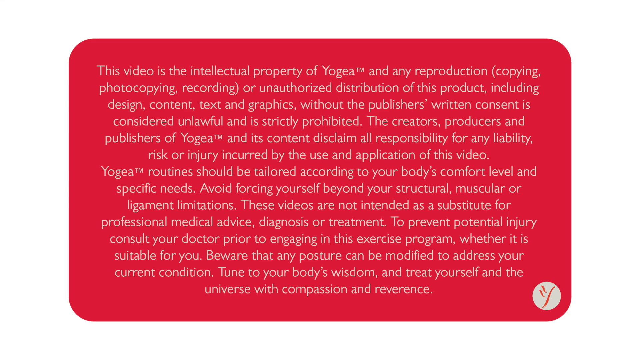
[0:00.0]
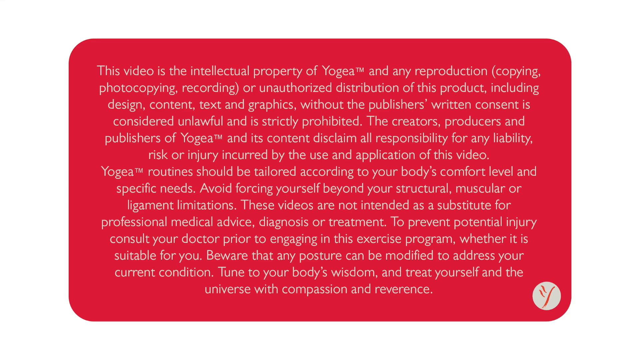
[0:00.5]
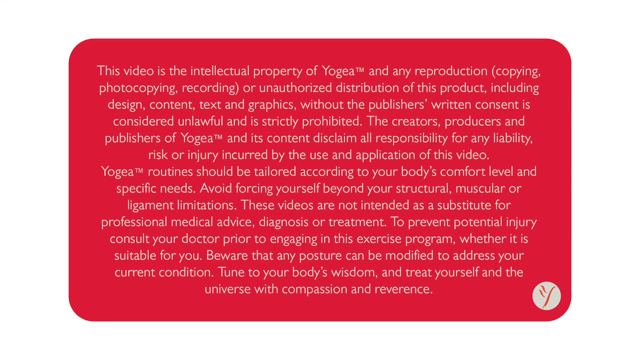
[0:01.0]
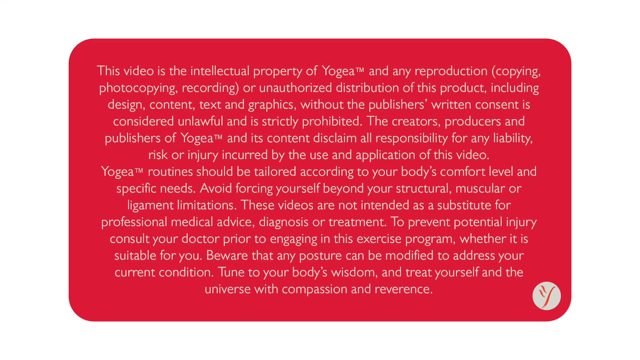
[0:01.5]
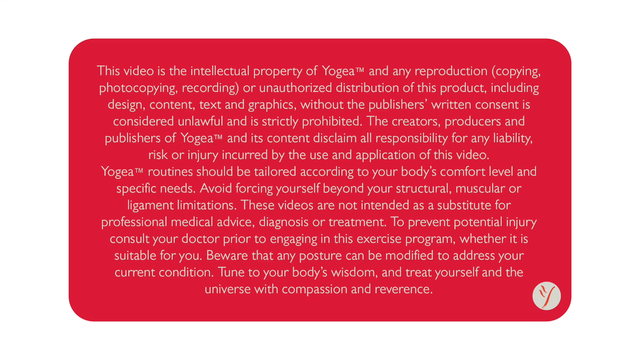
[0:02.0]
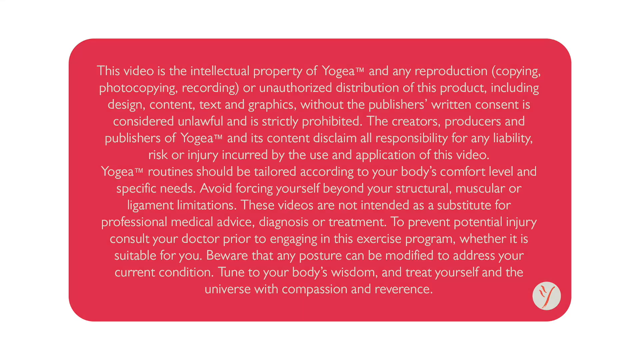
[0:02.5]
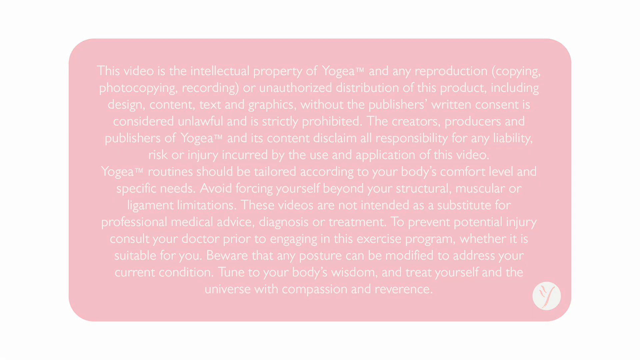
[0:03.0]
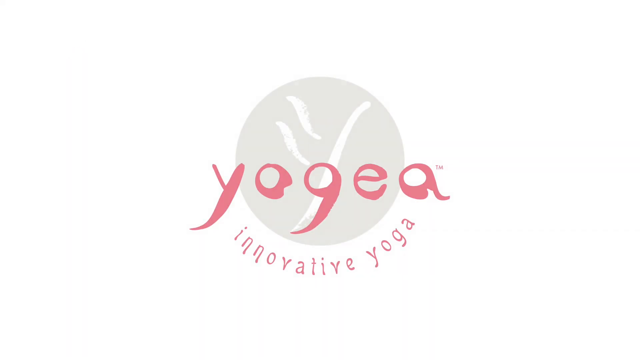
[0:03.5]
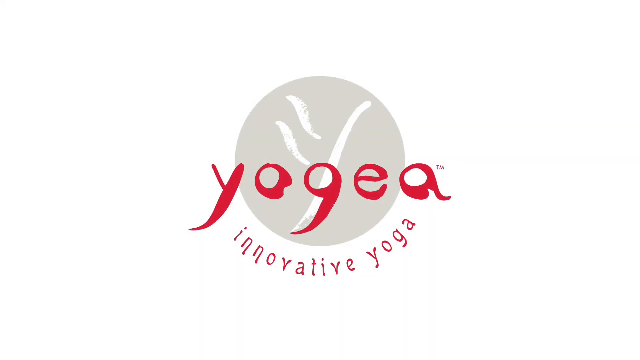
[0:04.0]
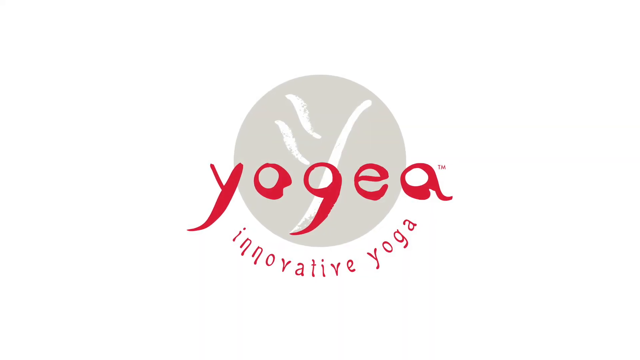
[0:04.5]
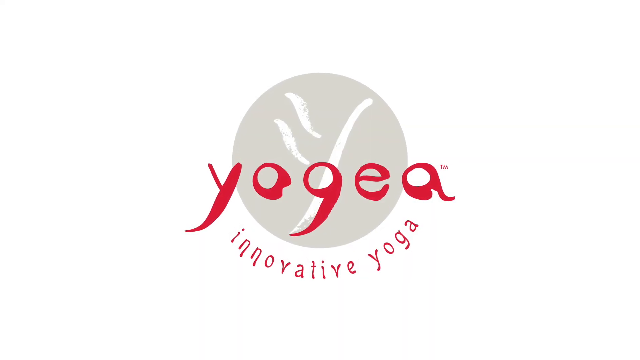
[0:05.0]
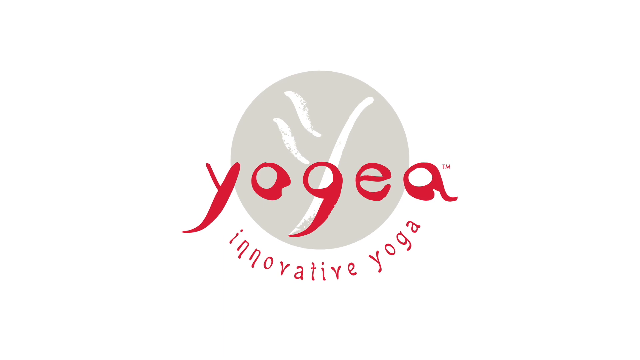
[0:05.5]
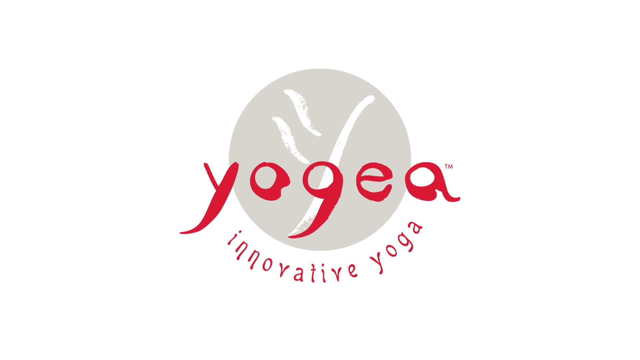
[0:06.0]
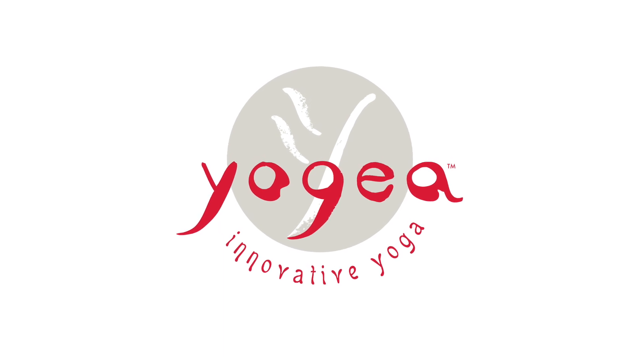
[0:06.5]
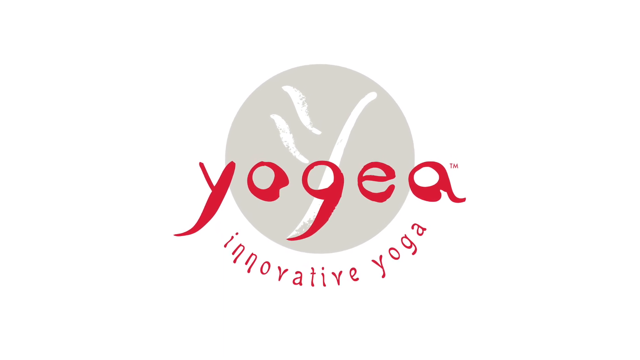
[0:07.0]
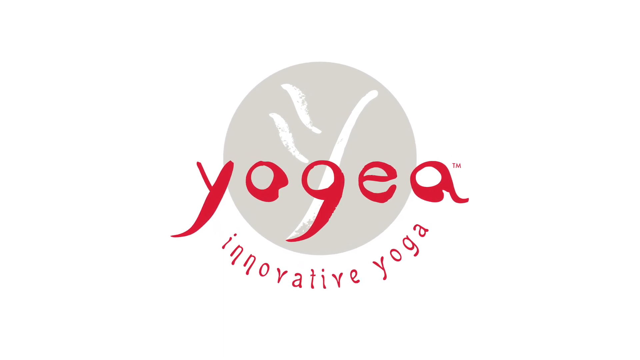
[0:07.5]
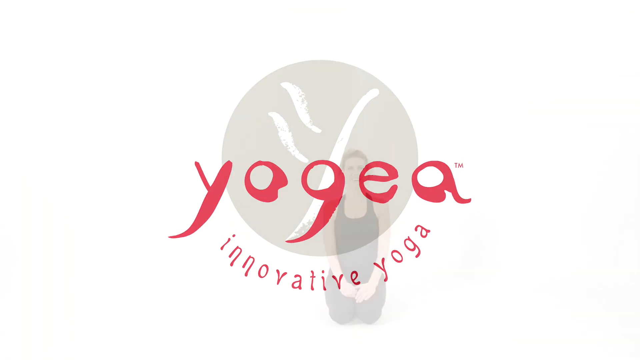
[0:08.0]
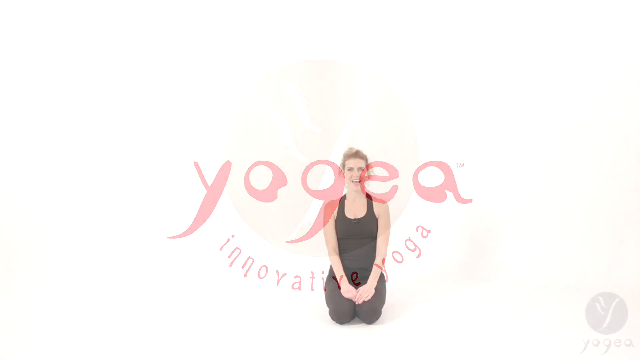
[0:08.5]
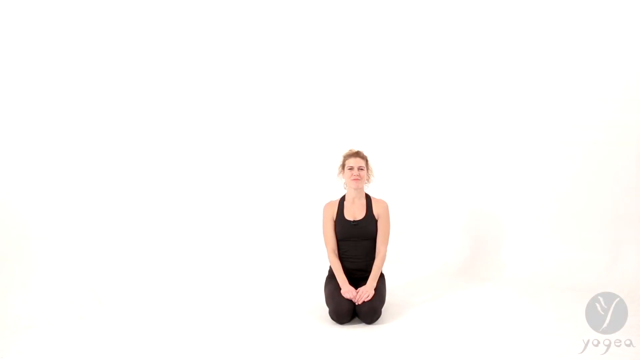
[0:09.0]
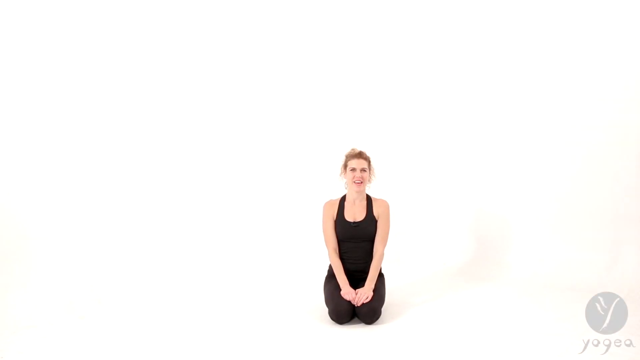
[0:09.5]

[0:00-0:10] The video opens with a large disclaimer in white text on a red background. The text states that the video is the intellectual property of Yogea and that any reproduction, copying, photocopying, recording, or unauthorized distribution of the product, including design, content, text, and graphics, without the publisher's written consent is considered unlawful and strictly prohibited; the rest of the paragraph outlines the owner's terms regarding the video. Next comes the Yogea logo with the tagline "Innovative yoga" underneath. A woman then appears sitting on the floor, facing the camera. She wears a black leotard bodysuit, and her blonde hair is pulled up into a bun behind her head.